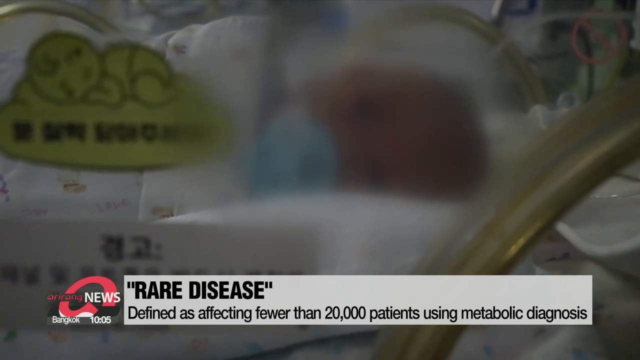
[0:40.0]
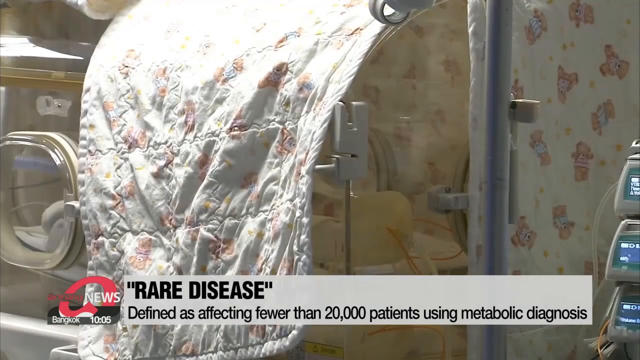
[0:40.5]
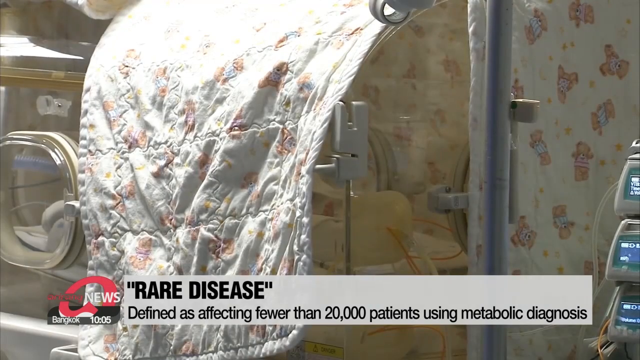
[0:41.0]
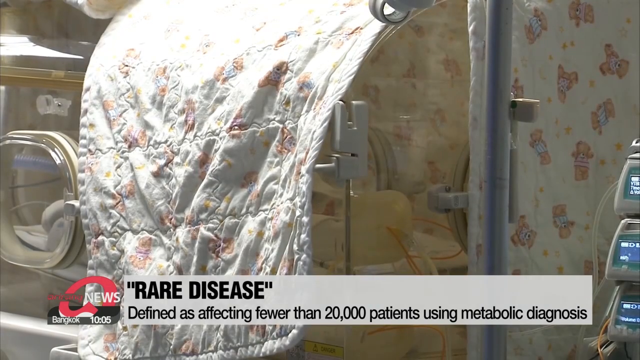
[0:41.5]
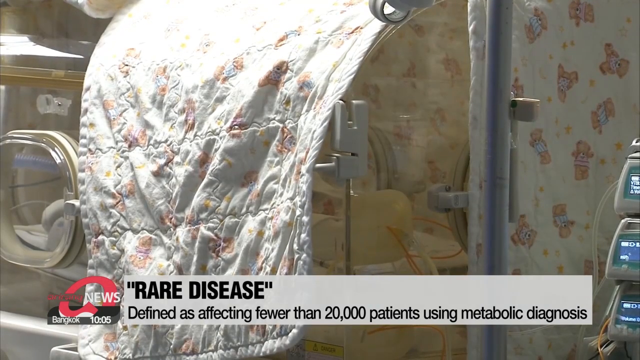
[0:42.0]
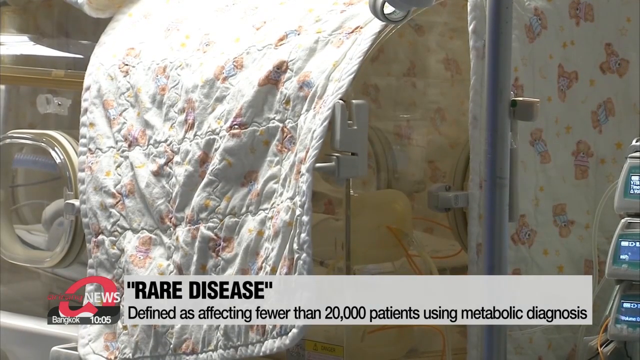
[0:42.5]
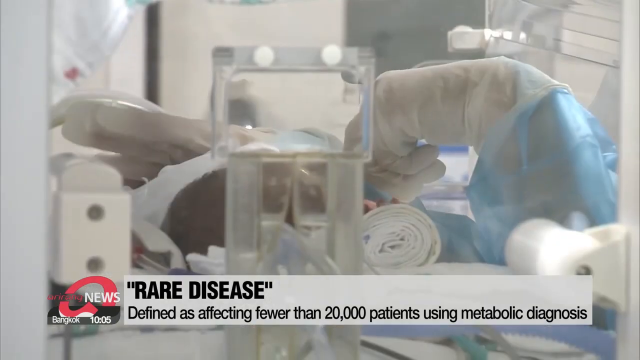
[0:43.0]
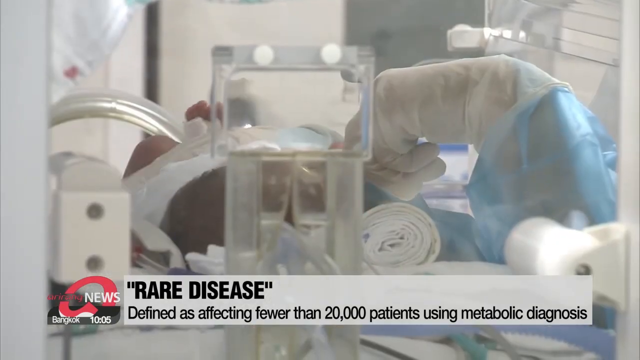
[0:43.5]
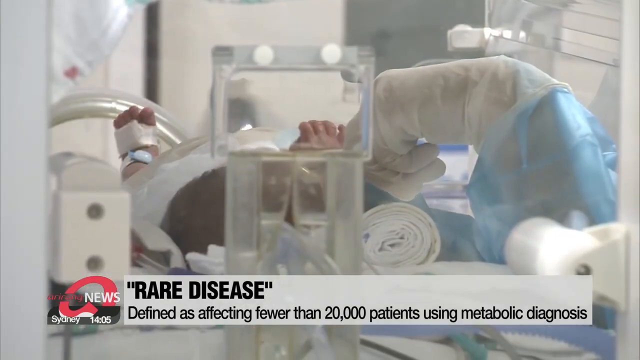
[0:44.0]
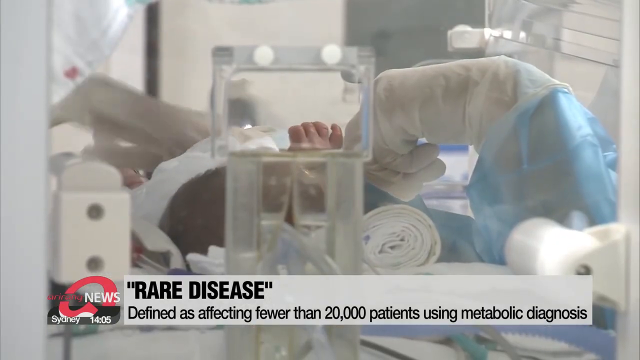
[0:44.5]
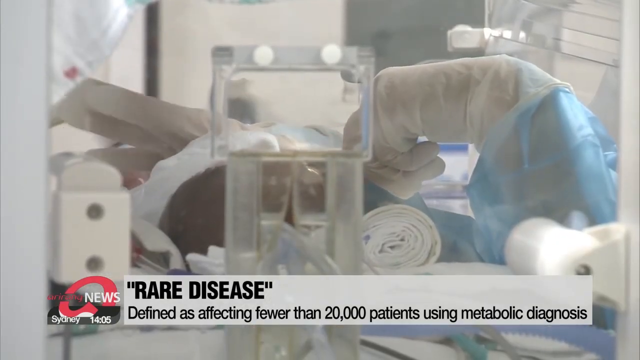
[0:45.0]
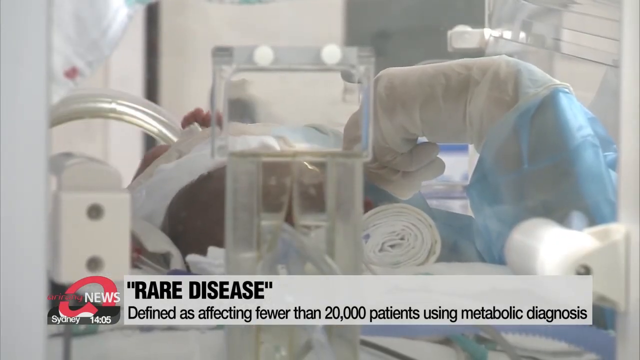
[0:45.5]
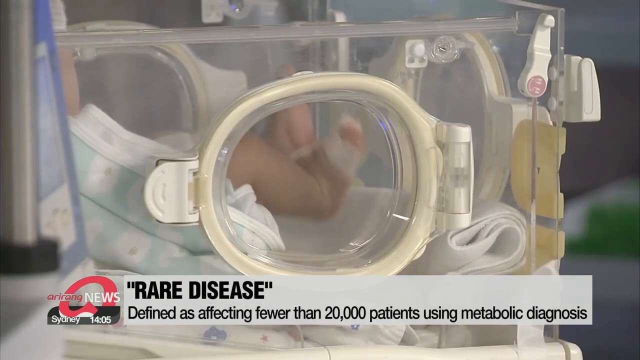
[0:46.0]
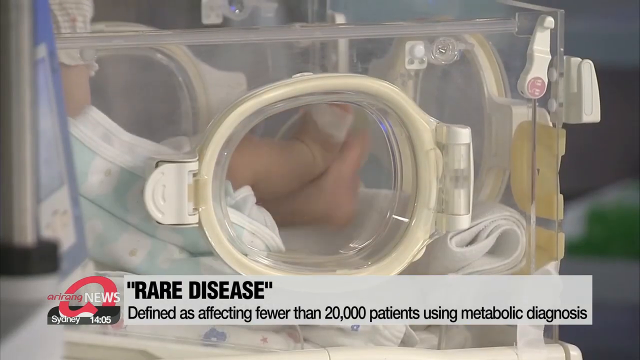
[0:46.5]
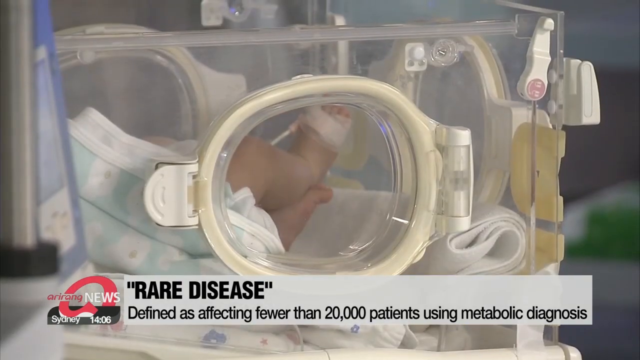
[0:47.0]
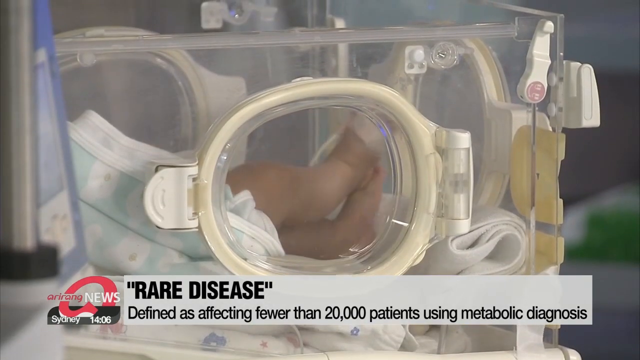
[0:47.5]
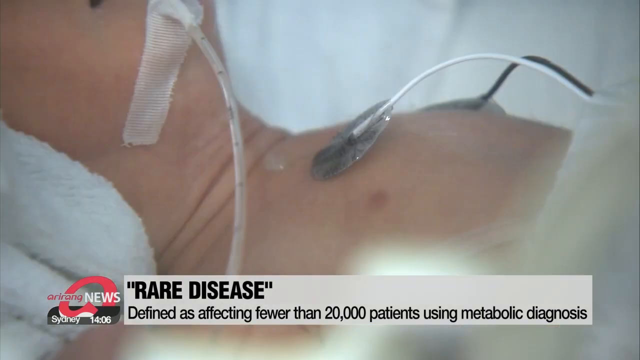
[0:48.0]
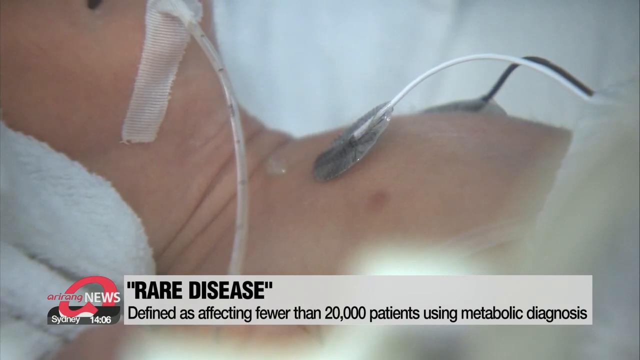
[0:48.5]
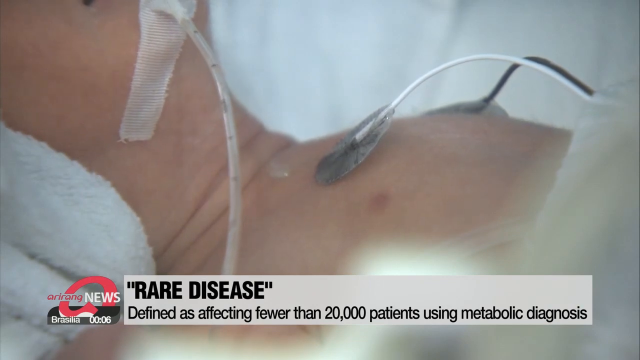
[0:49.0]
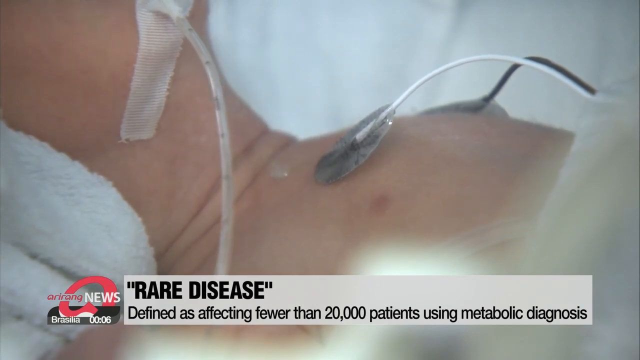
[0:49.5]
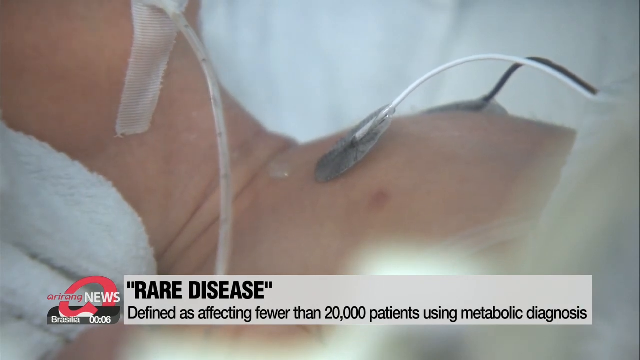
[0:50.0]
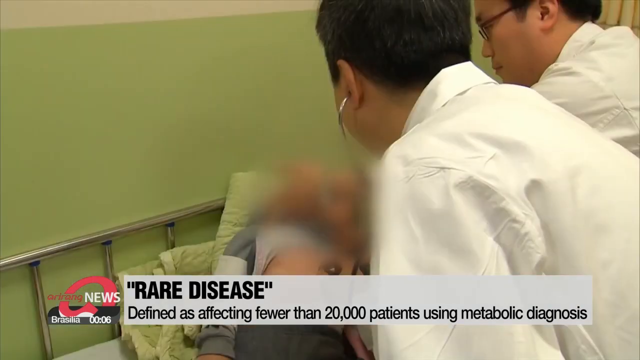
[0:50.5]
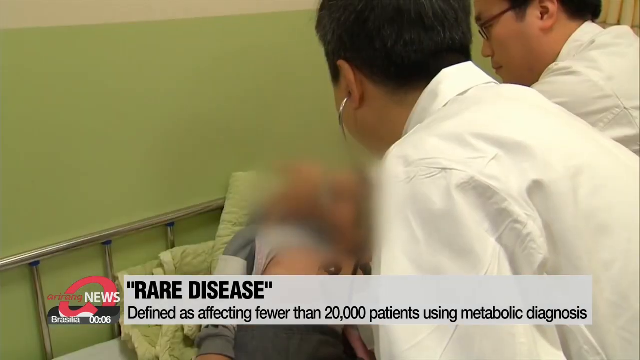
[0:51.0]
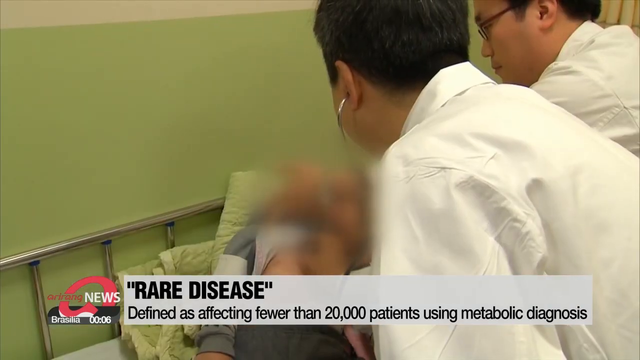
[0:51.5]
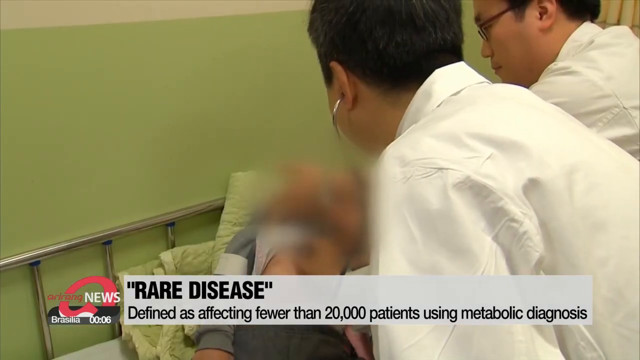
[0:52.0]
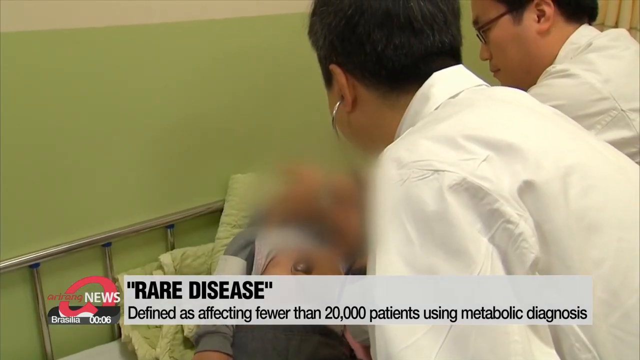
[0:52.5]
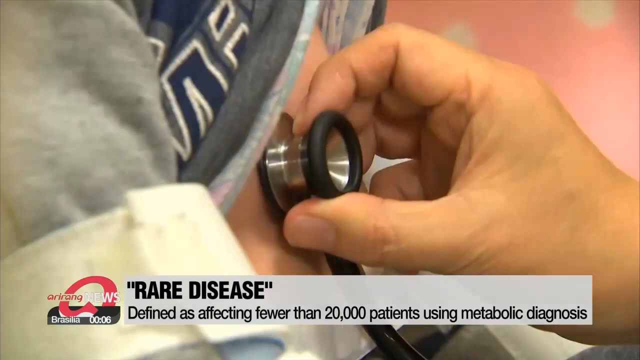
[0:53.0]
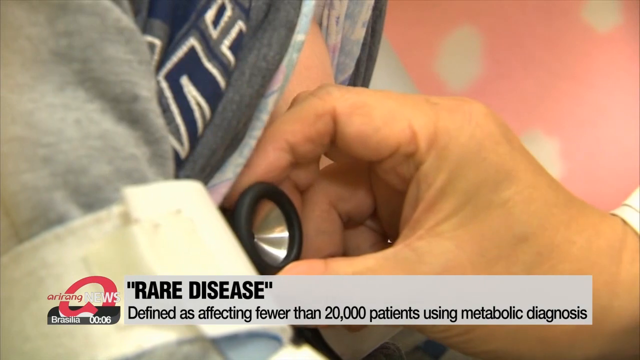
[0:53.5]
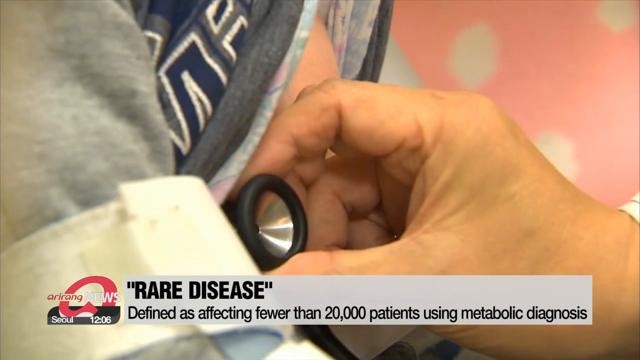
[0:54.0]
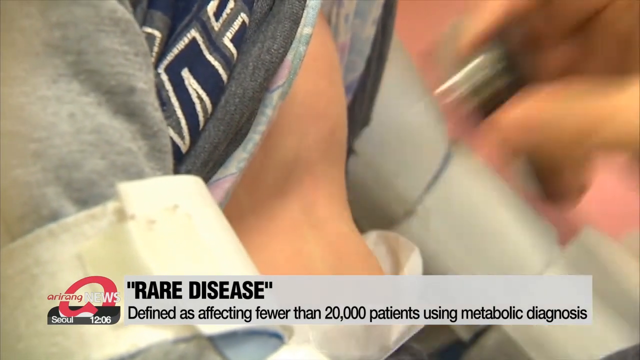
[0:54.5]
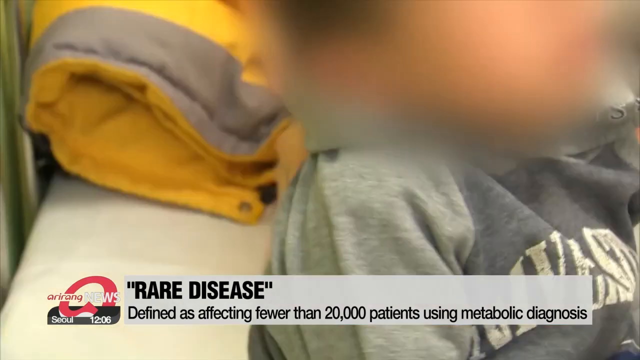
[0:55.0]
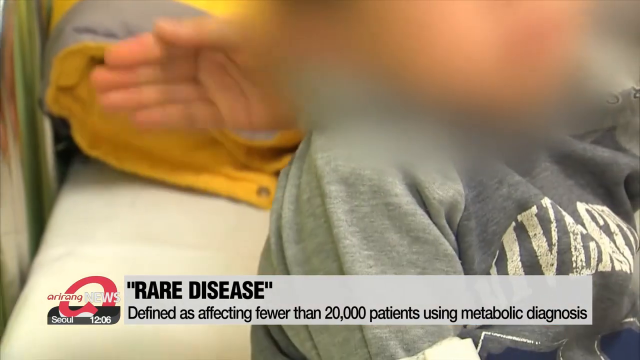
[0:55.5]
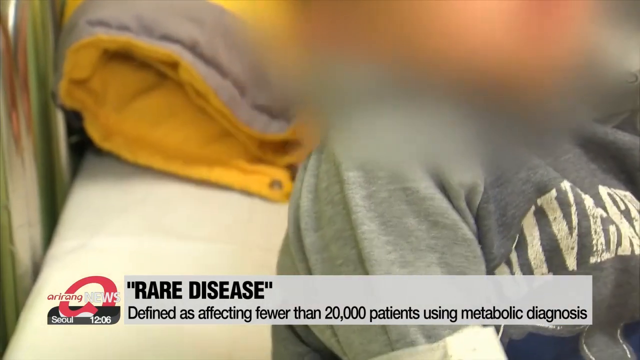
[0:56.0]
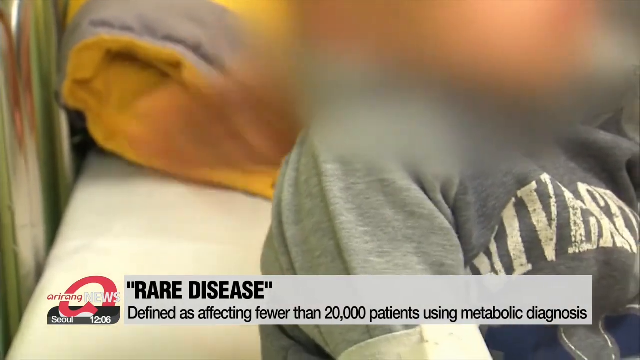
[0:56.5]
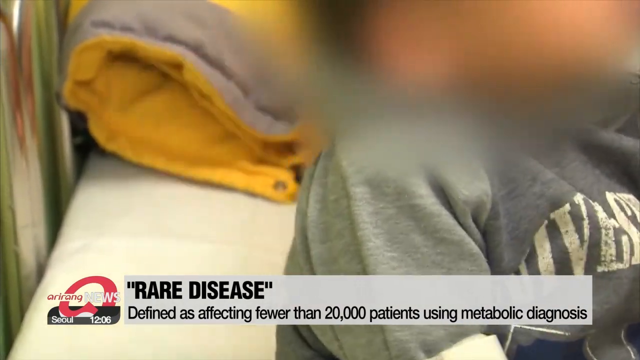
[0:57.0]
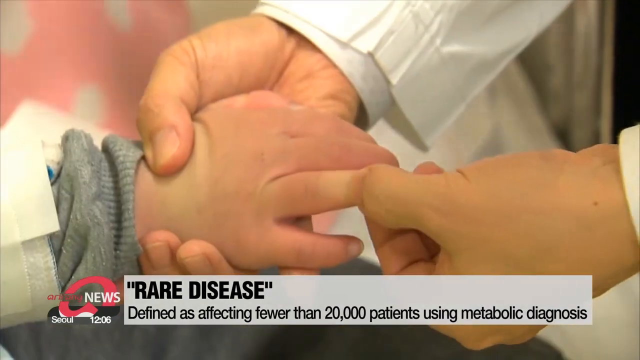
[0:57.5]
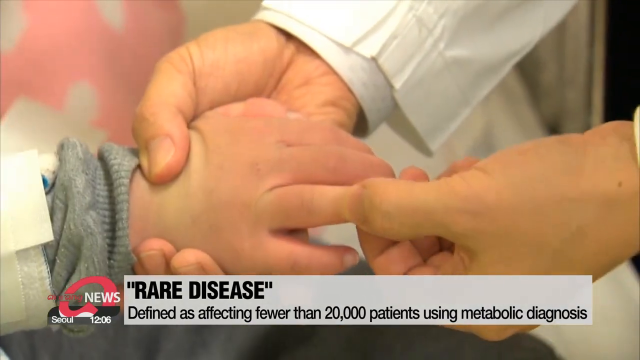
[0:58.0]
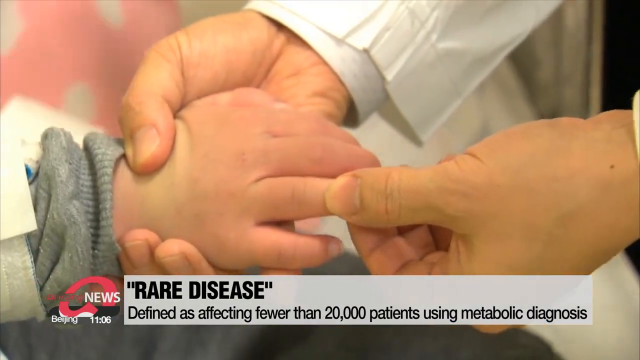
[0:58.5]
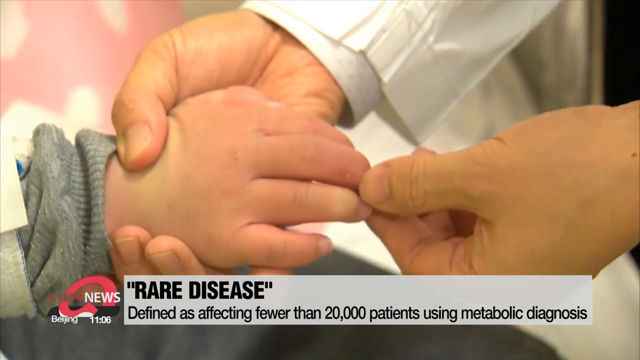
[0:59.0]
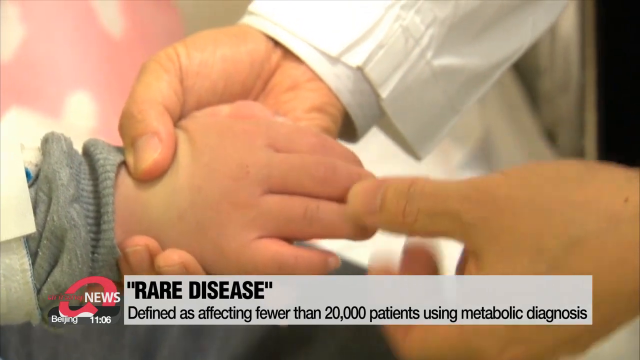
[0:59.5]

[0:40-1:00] Another incubator has a blanket draped over it, and a series of shots shows different incubators. In one, only a baby's legs are visible, kicking, with a heart monitor taped onto the feet. A close-up shows a baby from the chin down, with a breathing tube and two wires taped onto its chest as it breathes. In another shot, with the baby's face blurred out, two doctors in white shirts listen to a small infant's heart with a stethoscope. Someone then pats a baby's back. A close-up follows of a toddler's hand held by a doctor, who presses the fingers with his other hand, apparently to check the baby's condition. The video then cuts to a woman being interviewed.